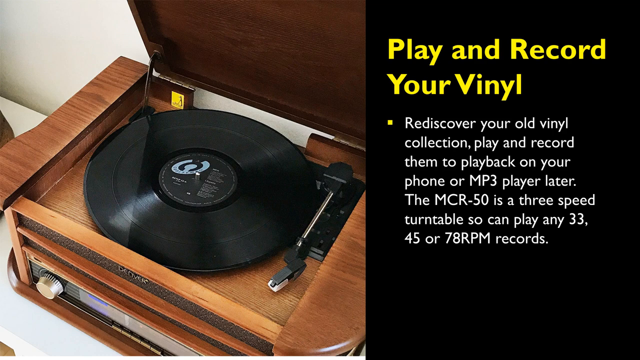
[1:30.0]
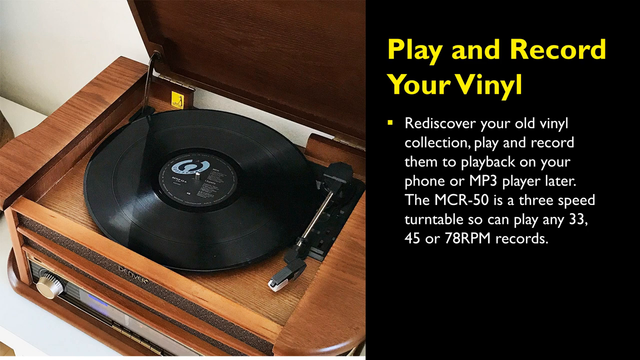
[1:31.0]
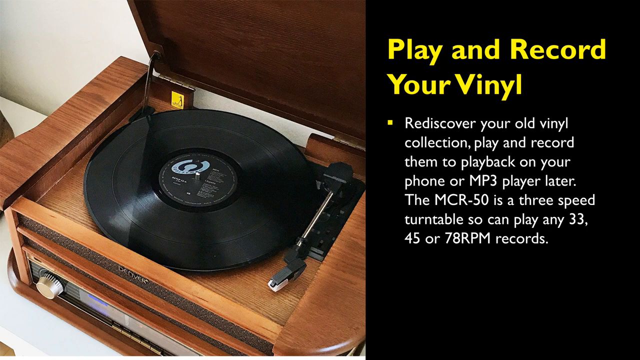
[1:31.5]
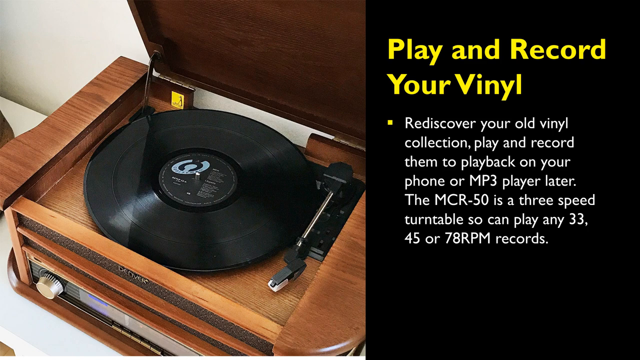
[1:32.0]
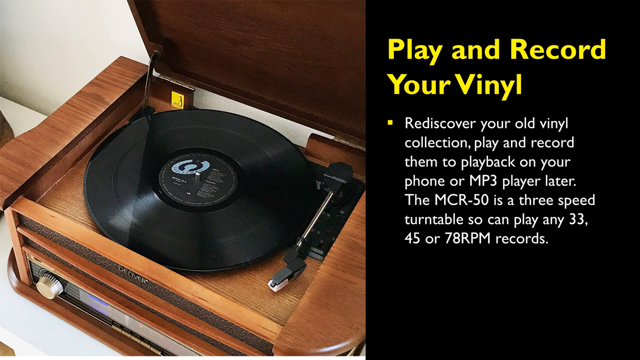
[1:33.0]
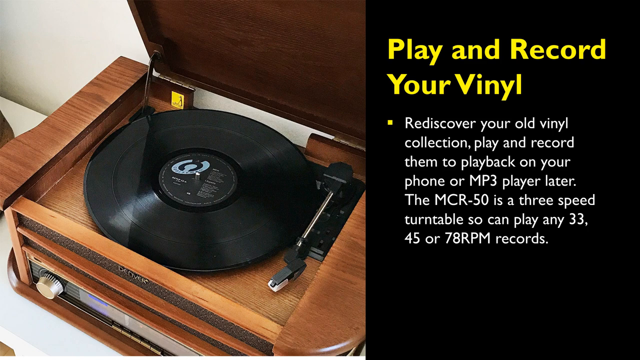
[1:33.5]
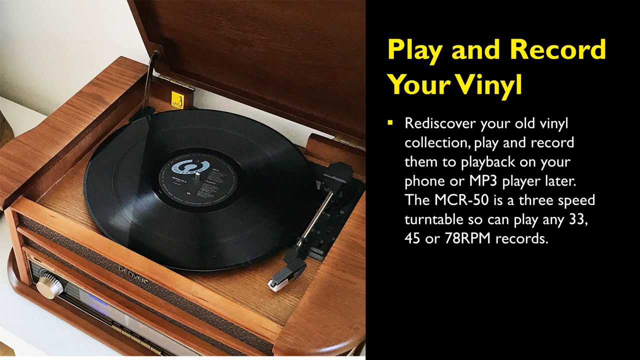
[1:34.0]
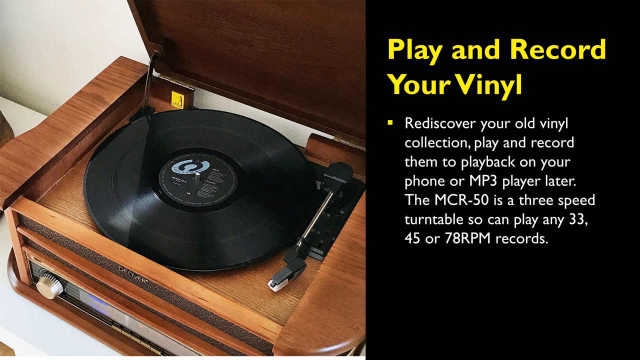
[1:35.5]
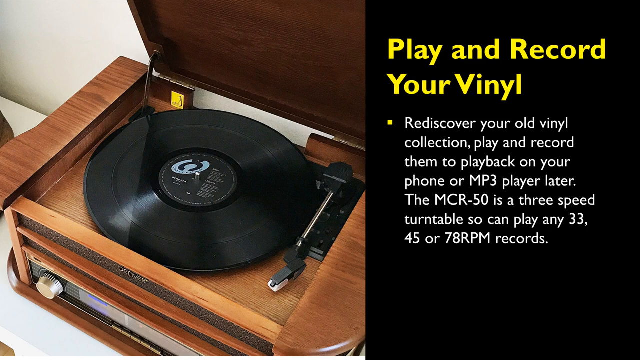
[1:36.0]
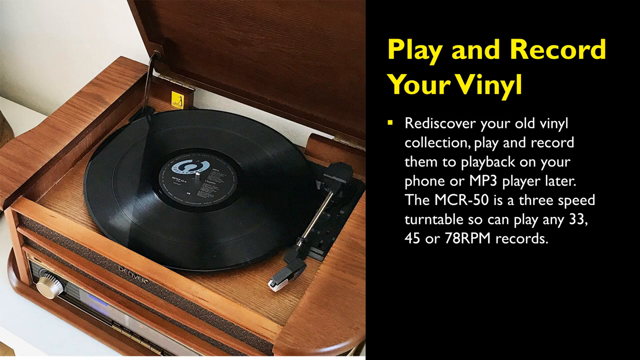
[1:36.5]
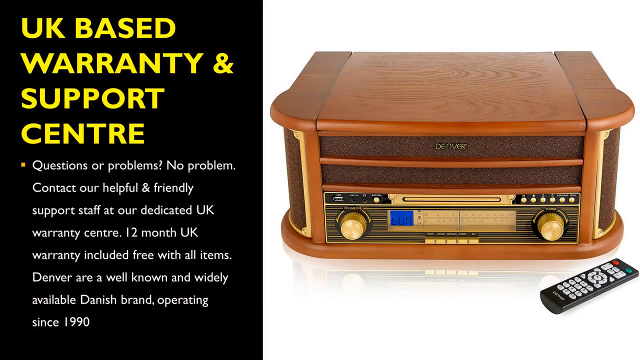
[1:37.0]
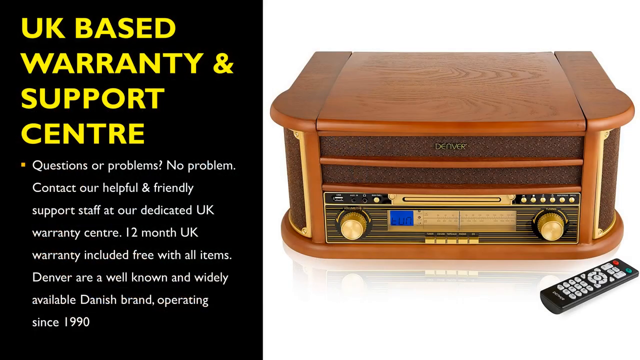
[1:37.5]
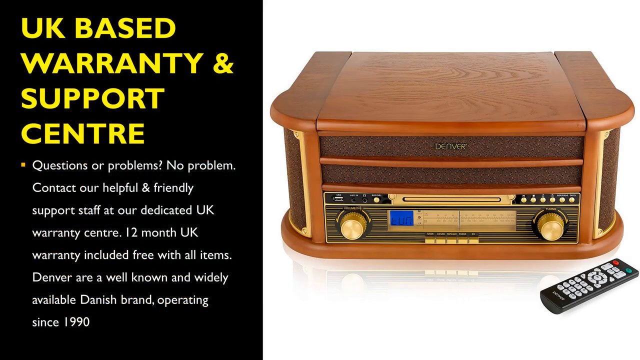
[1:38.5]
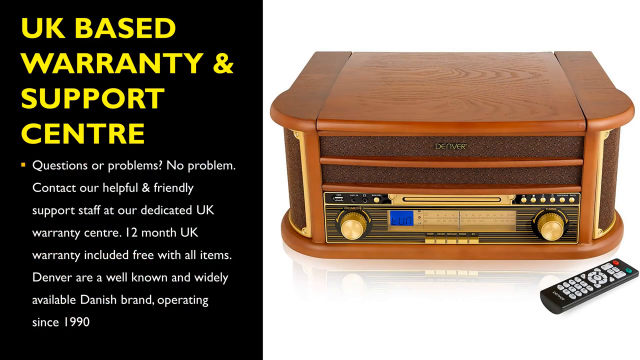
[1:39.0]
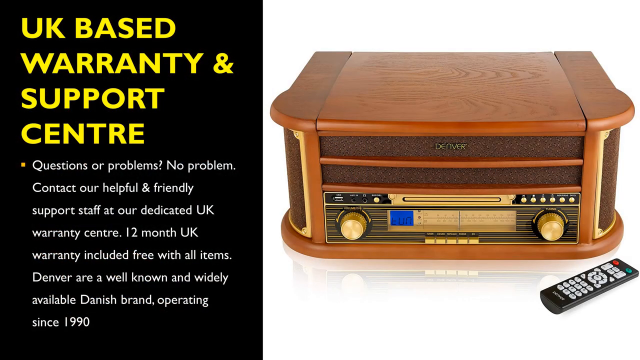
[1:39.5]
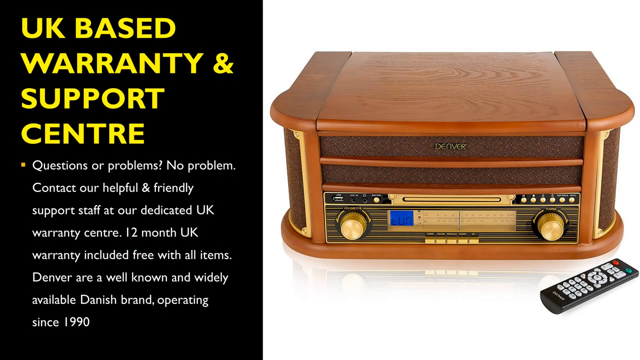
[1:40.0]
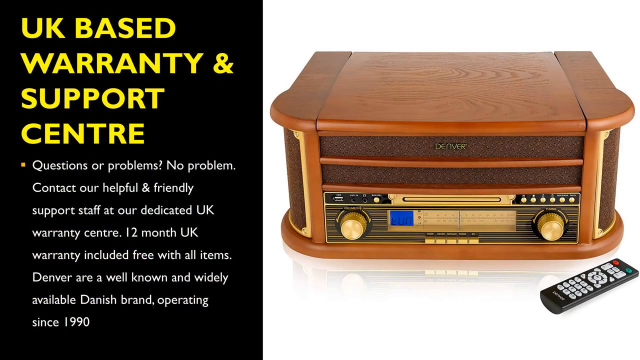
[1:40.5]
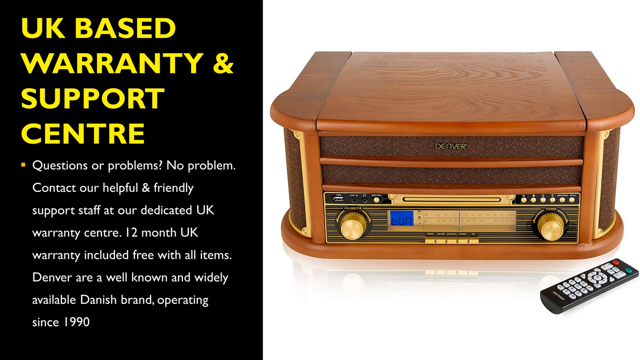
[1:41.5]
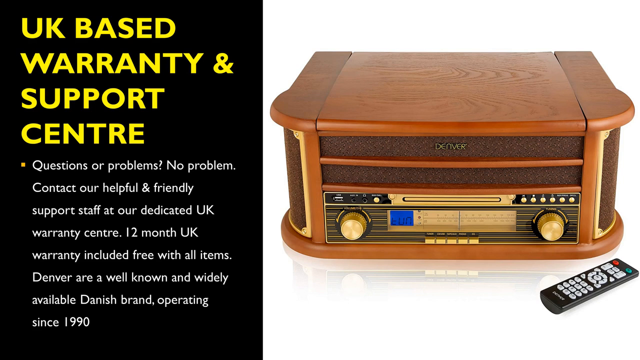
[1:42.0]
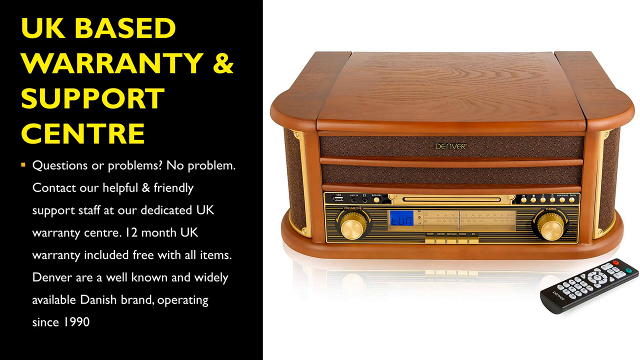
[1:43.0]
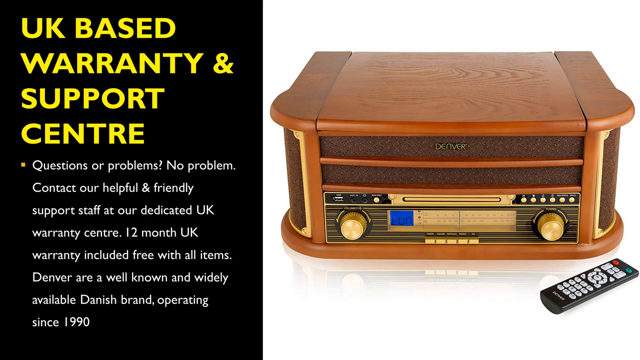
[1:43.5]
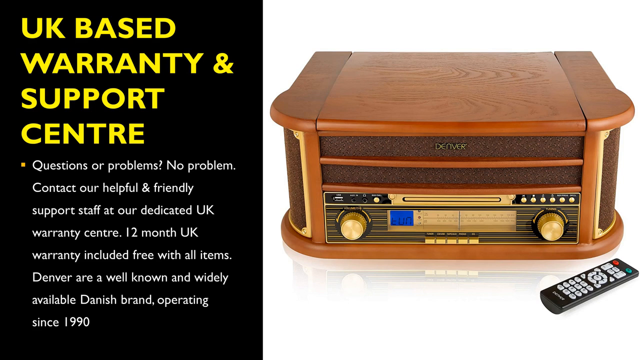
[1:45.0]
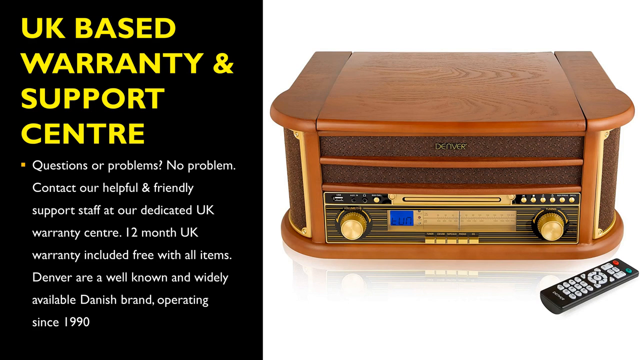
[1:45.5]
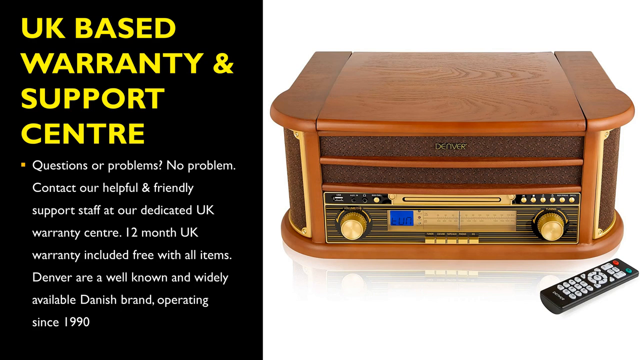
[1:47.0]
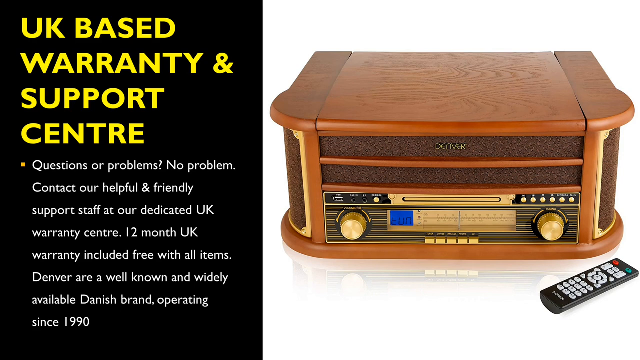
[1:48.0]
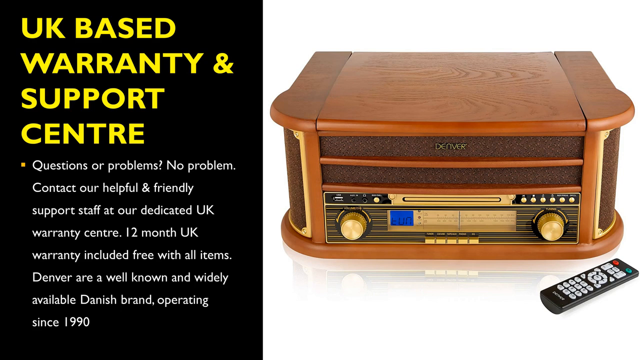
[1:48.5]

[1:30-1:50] On a solid black background on the right side, yellow text reads "play and record your vinyl". Next to a yellow bullet point, white text reads "rediscover your old vinyl collection. Play and record them to play back on your phone or mp3 player later. The mcr-50 is a 3 speed turntable so it can play any 33,45 or 78 rpm records." An image shows the part of the product where the vinyl is placed. The slide then switches, with the words now on the left side: yellow text reads "UK based warranty and support centre", with "centre" spelled c-e-n-t-r-e. Next to a yellow bullet point, white text reads "questions or problems no problem. Contact our helpful and friendly support staff at our dedicated UK warranty center. 12 months of UK warranty included free with all items." An image shows the product closed, kind of facing forward.